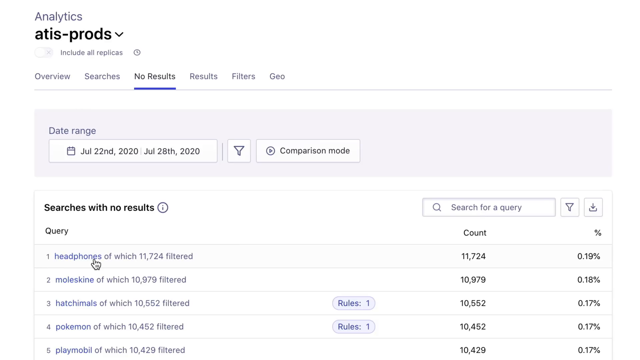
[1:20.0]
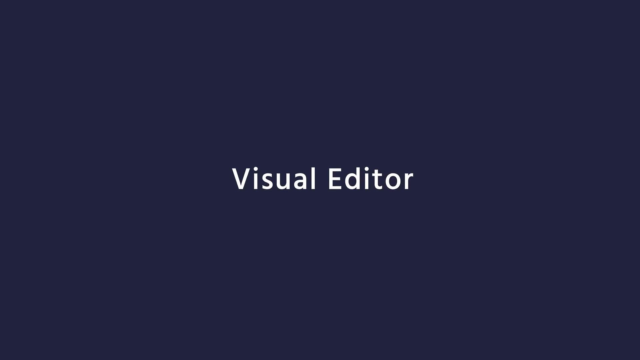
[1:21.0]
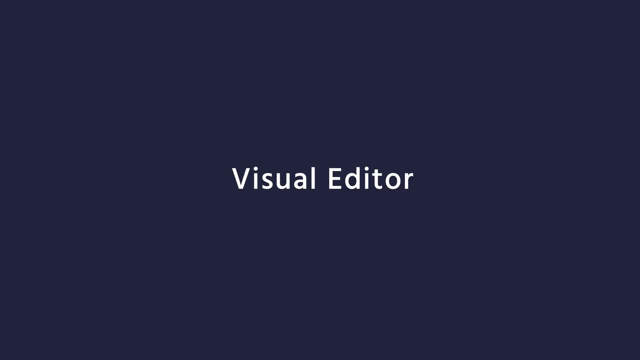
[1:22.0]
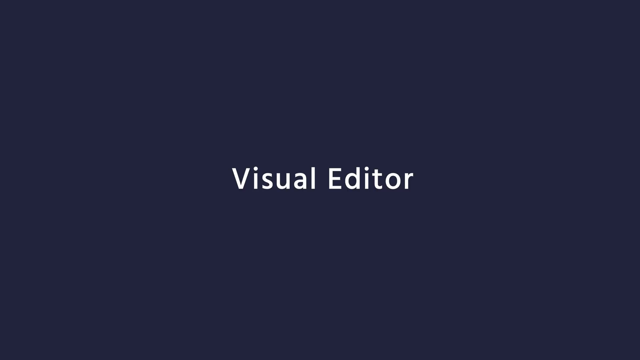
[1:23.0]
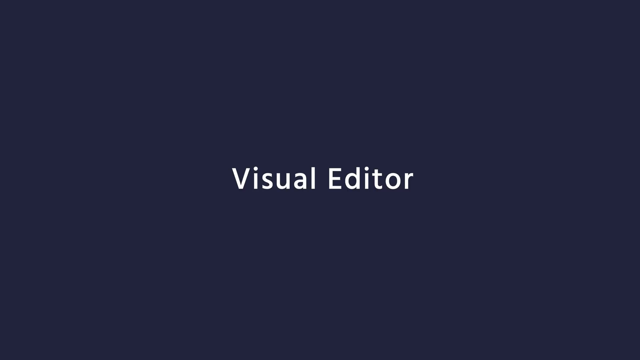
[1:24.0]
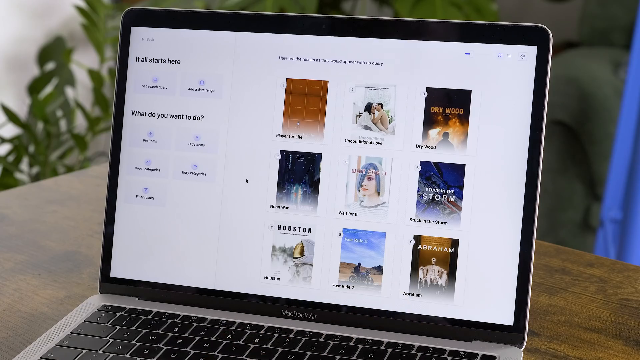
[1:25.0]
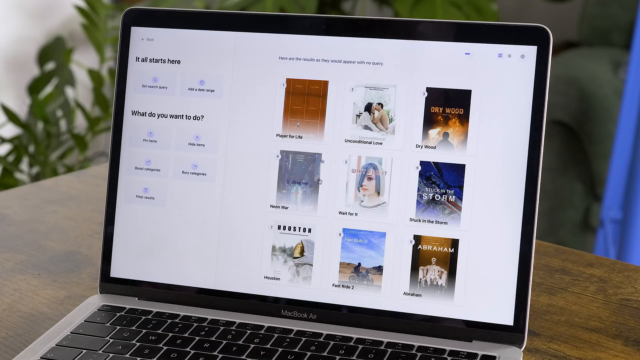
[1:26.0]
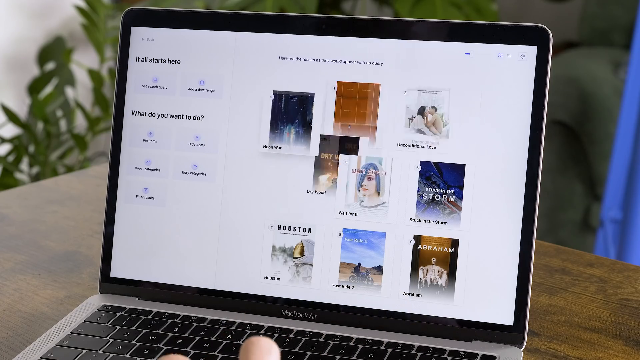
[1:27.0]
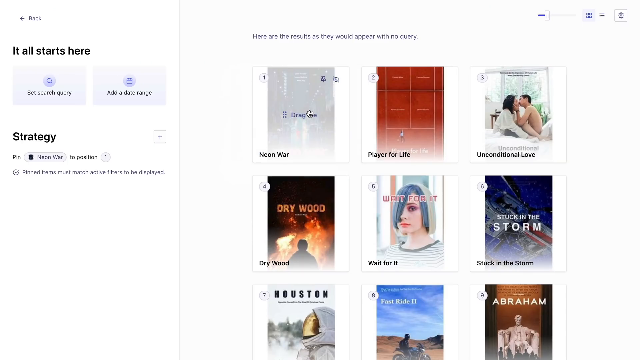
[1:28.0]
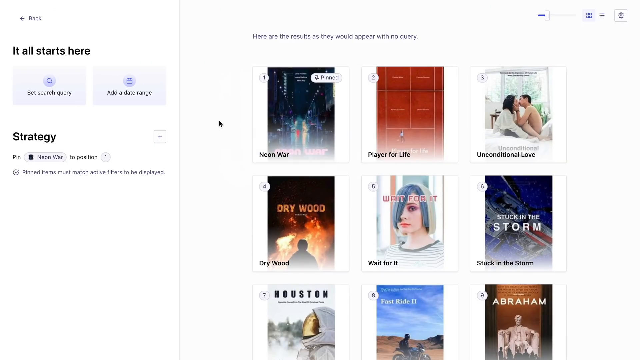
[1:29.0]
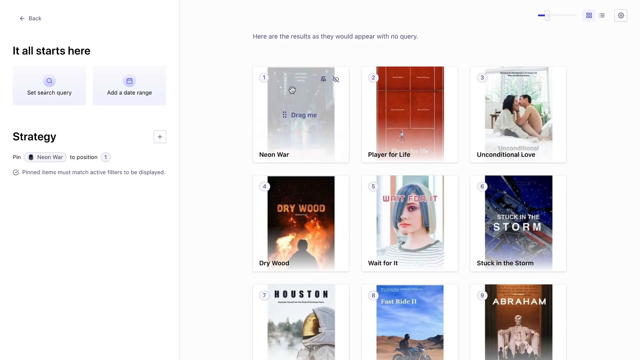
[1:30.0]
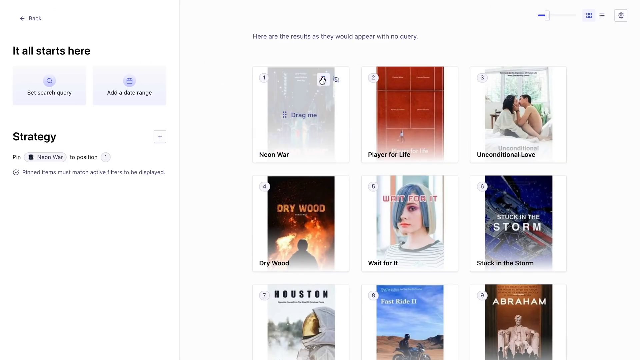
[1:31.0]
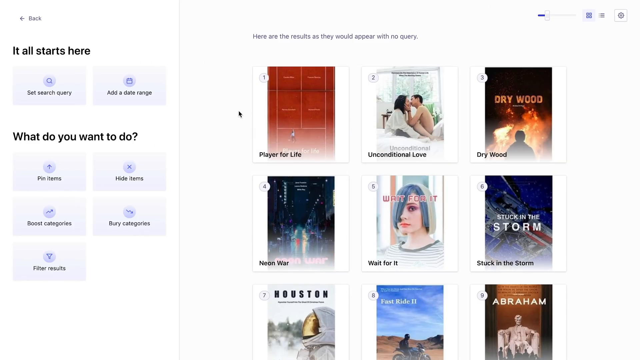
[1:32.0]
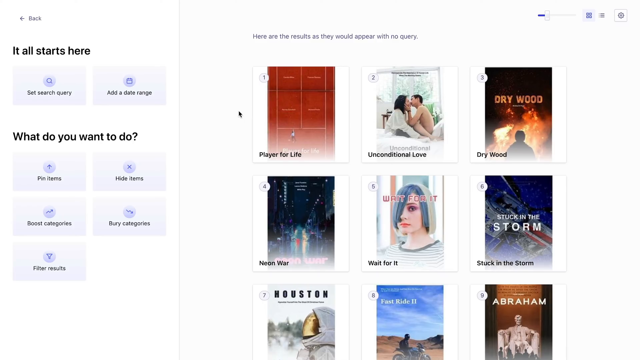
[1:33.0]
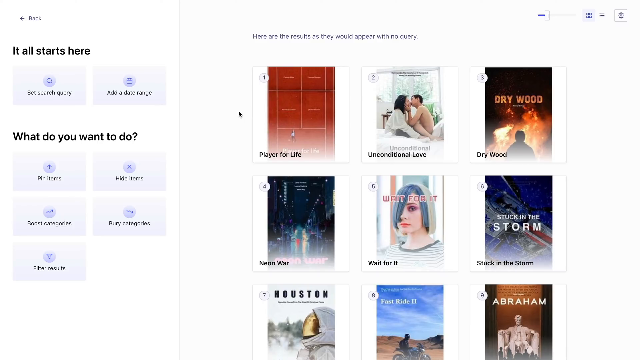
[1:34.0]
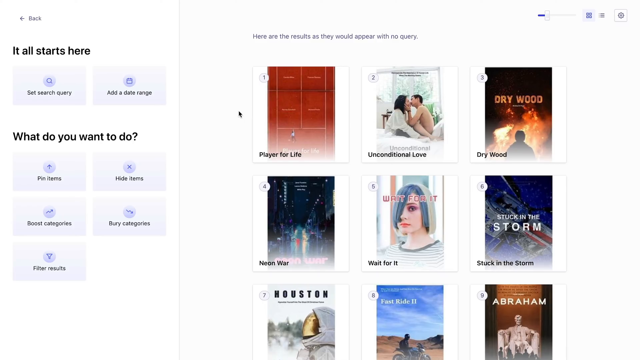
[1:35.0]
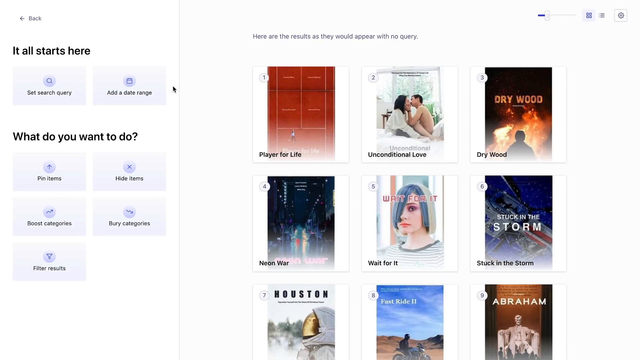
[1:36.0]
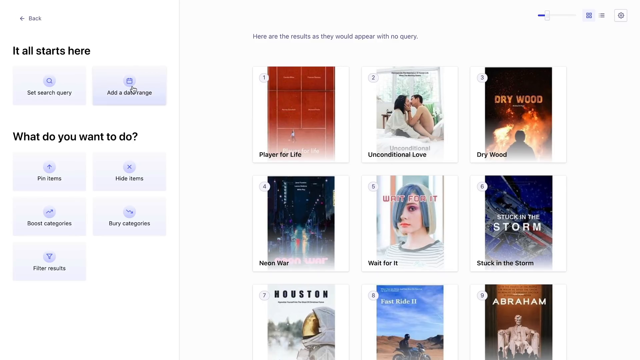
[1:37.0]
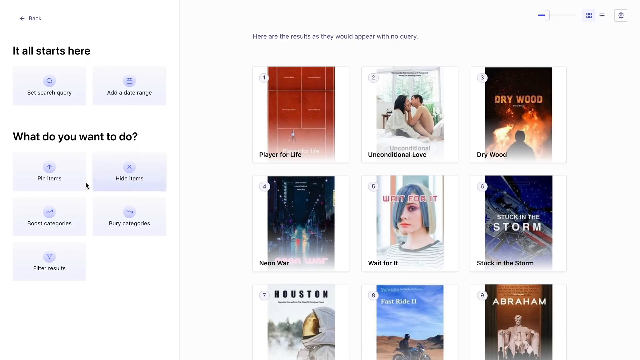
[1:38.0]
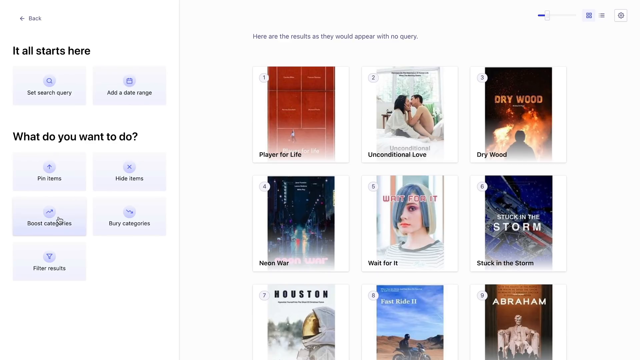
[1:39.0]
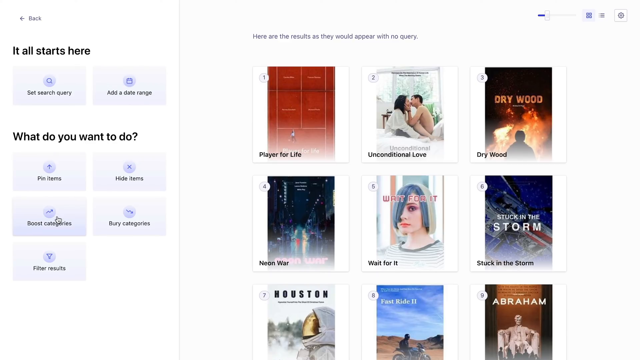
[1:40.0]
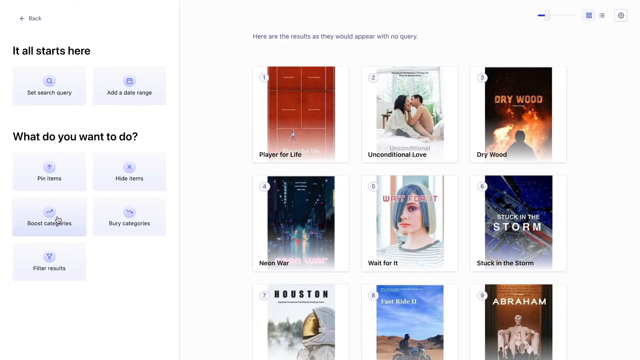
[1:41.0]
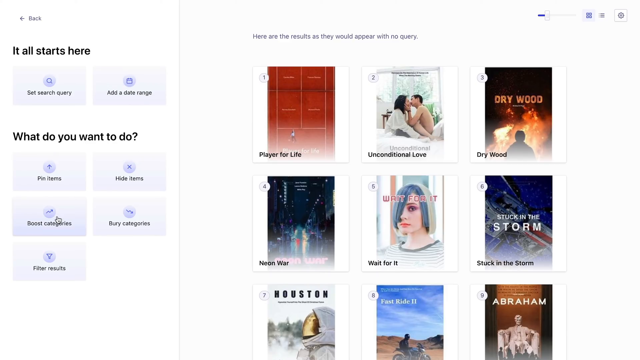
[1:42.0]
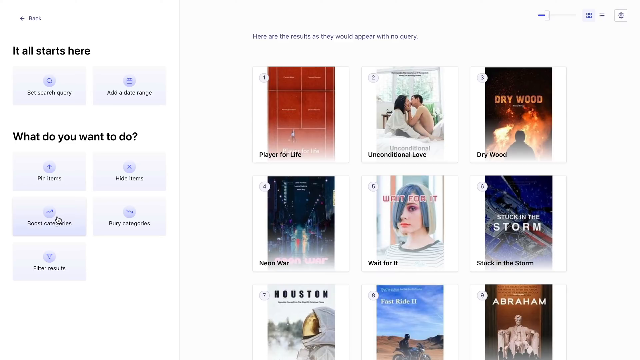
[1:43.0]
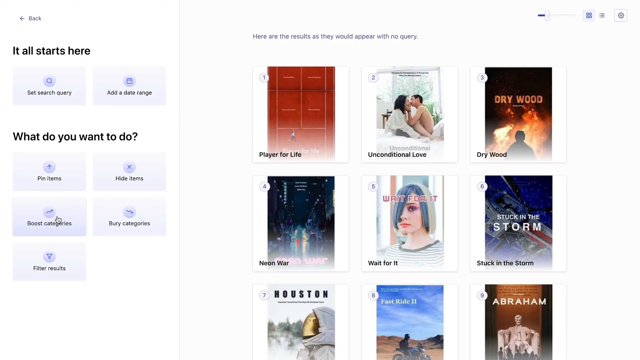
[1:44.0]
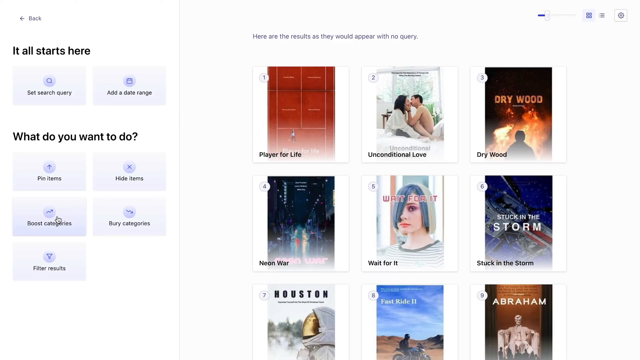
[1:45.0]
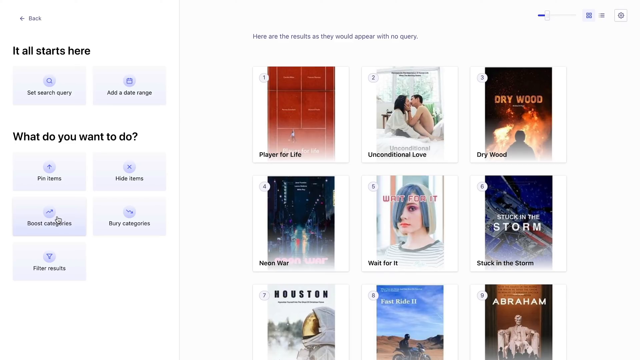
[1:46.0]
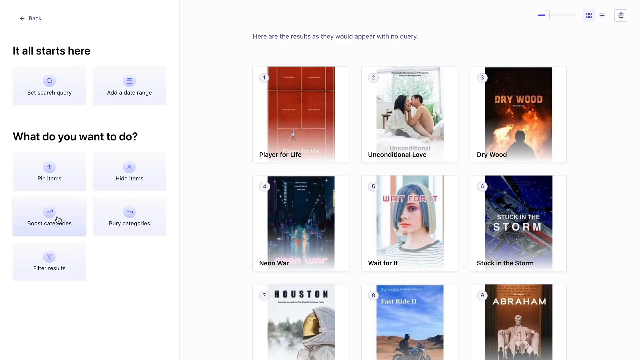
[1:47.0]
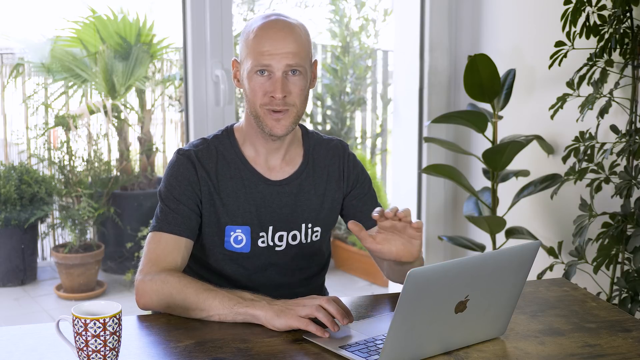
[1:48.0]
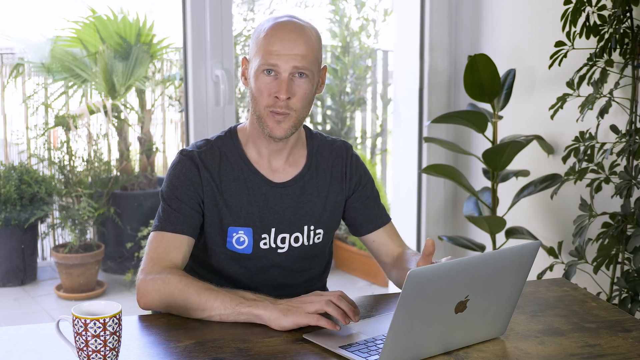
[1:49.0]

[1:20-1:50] The man teaches about a program or app called Algolia, whose logo has a stopwatch next to the words. He shows his computer, on an analytics section that says "ATIS-PRODS" with a pull-down. The query entries include headphones, moleskine, Hatchimals and Pokemon. Then it says "visual editor", and he is on a screen with what almost looks like the covers of different movies. He drags things around, switching their order, and keeps clicking to do so. The items that look like movies include Player for Life, Unconditional Love, Dry Wood, Neon War, Wait for It, Stuck in the Storm, Houston, Asteroid 2 and Abraham. He moves the cursor up on the left-hand side where it says "add a data range", then goes down to "boost", apparently capabilities.